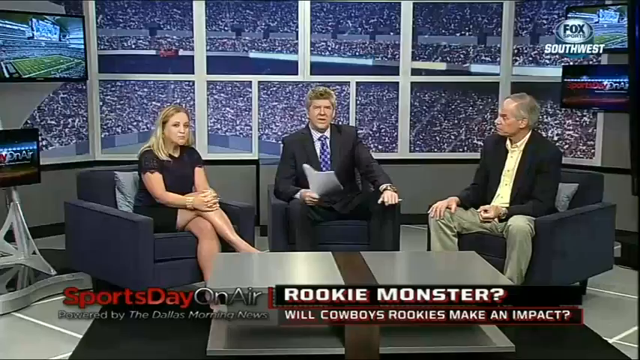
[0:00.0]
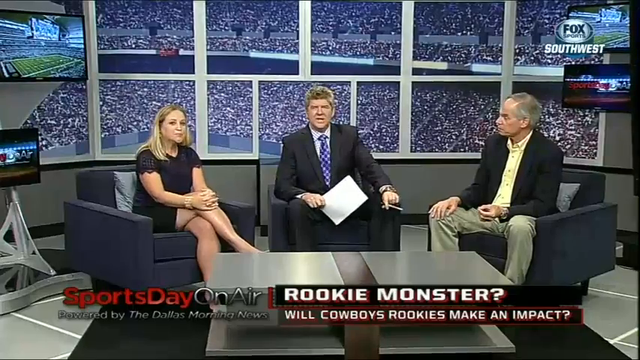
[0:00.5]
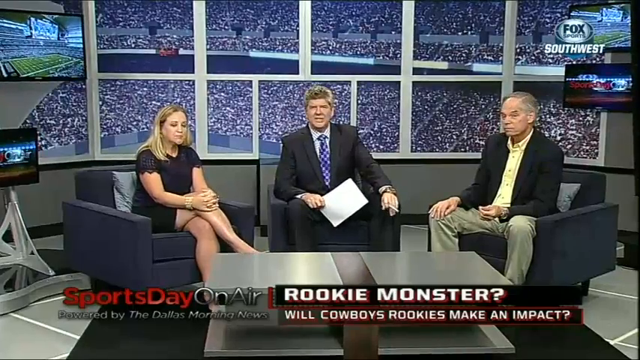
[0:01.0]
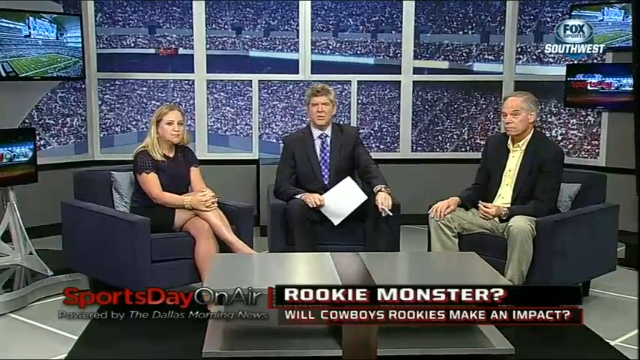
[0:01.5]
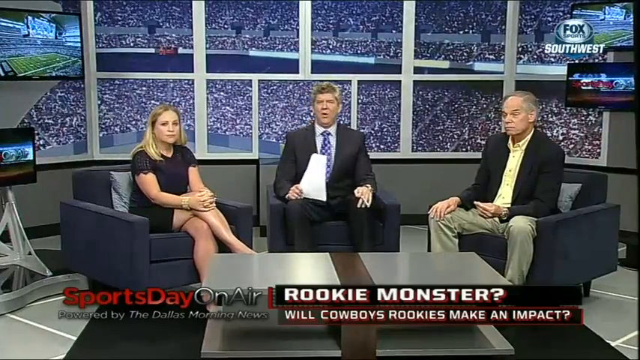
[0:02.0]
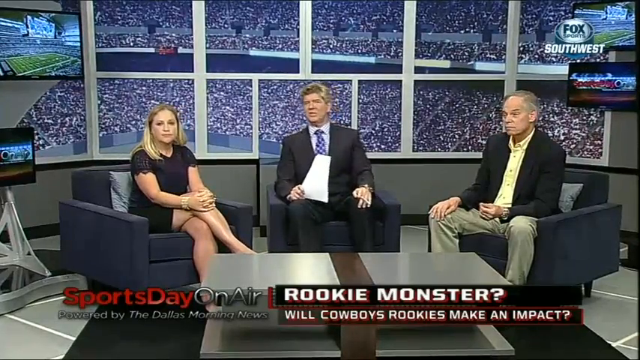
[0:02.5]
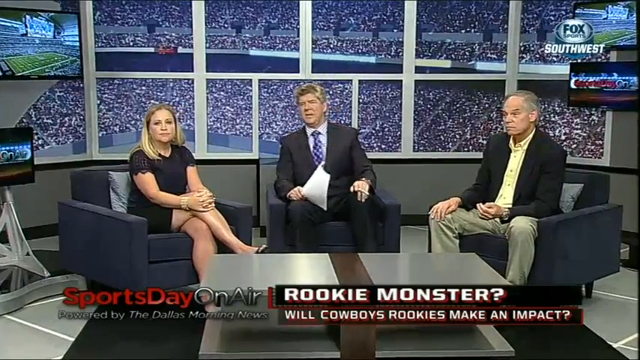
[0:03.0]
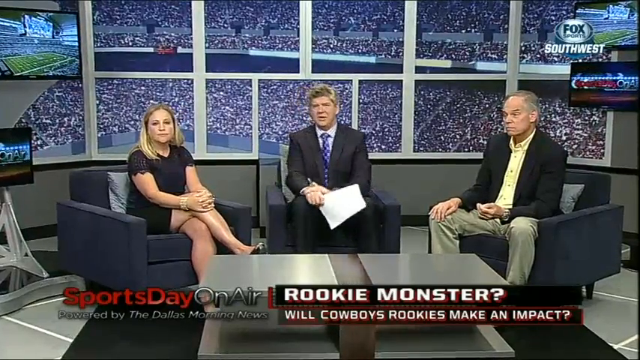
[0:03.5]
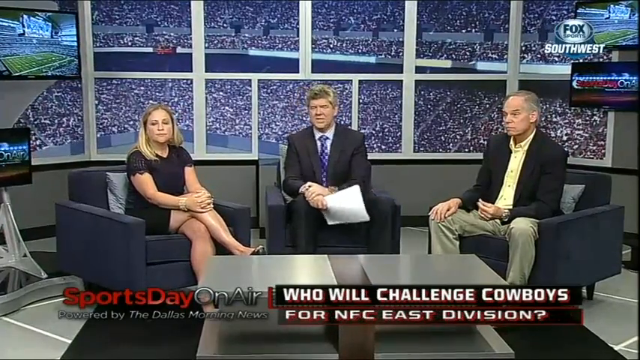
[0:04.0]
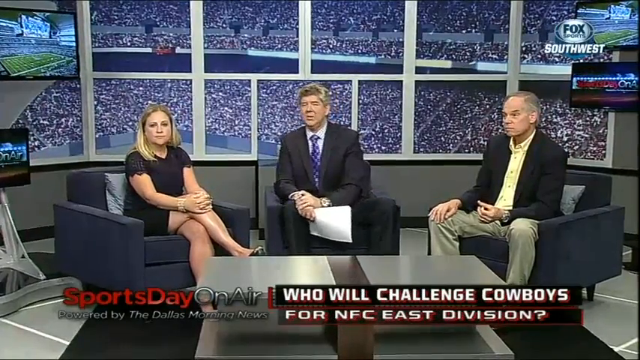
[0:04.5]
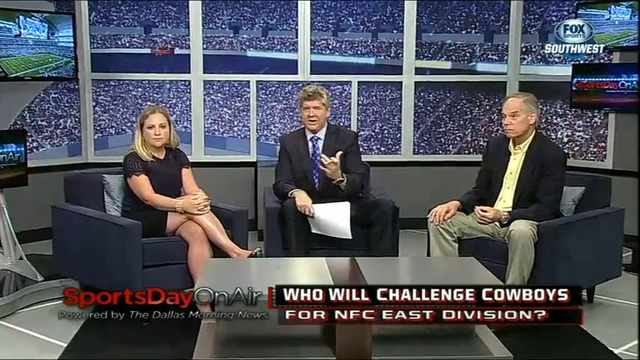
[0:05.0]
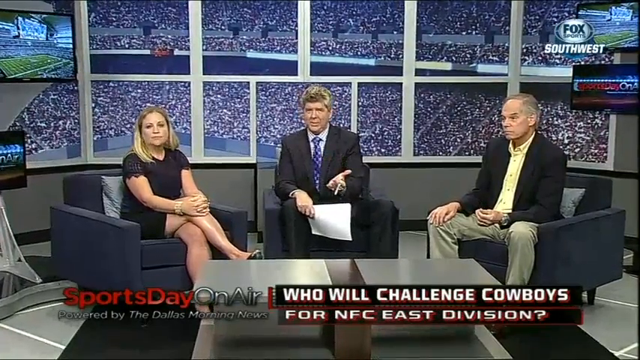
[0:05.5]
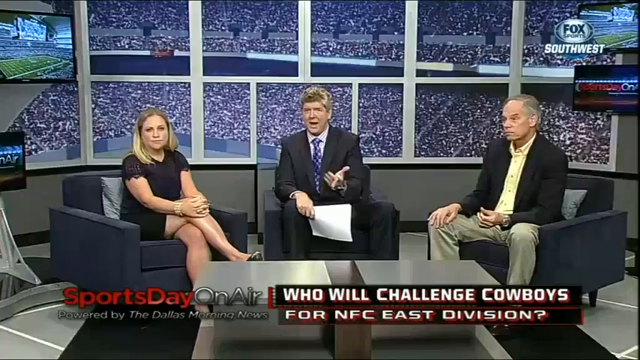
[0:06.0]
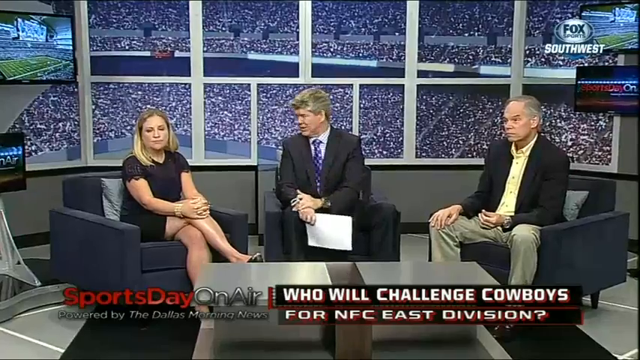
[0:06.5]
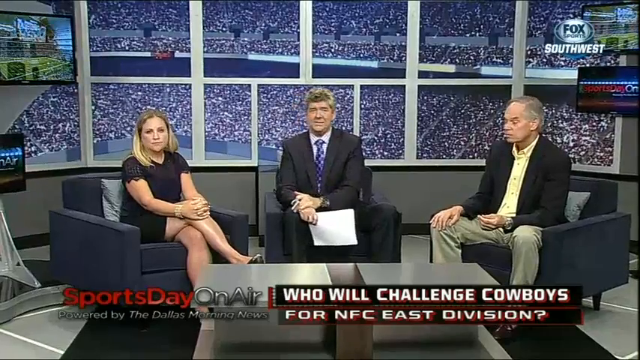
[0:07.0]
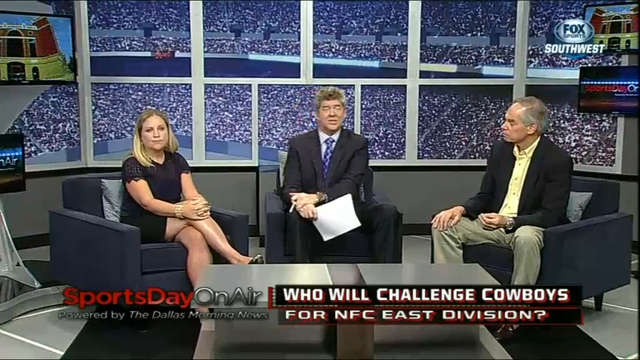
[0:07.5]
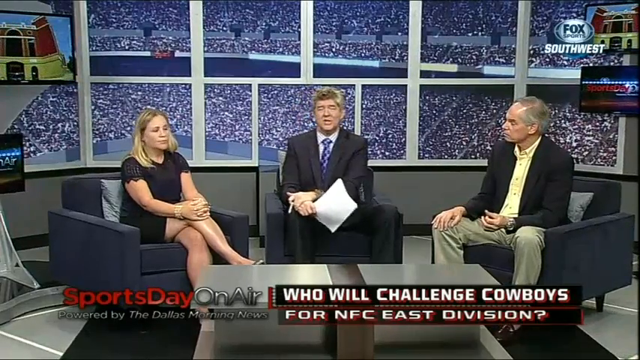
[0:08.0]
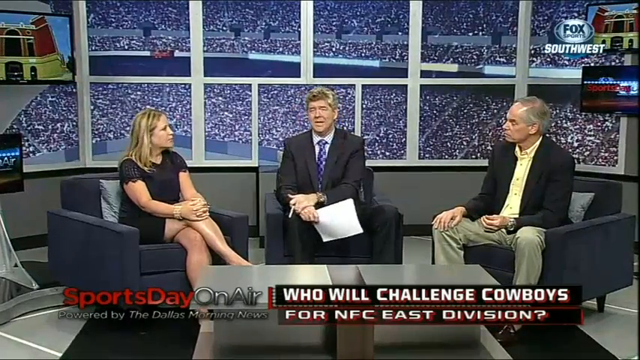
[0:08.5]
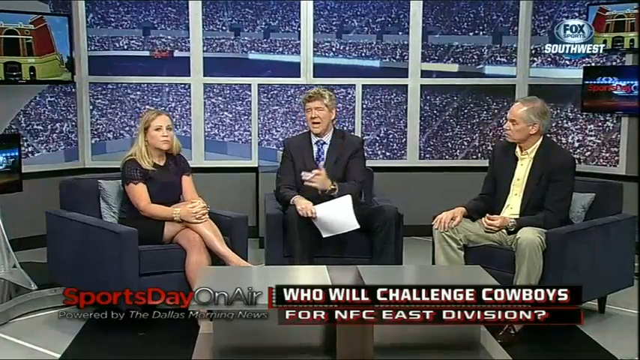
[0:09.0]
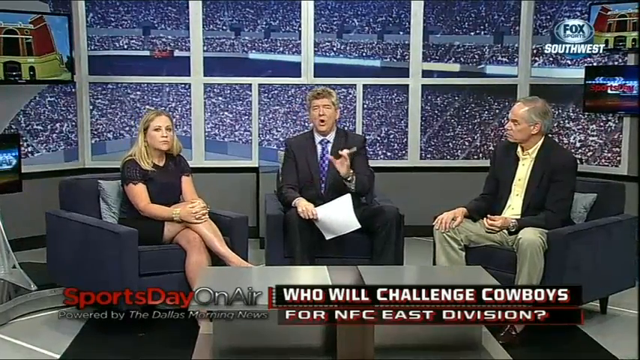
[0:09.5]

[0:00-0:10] Three people appear on what seems to be a TV broadcast: a small caption at the bottom reads "Sports Day on Air, powered by the Dallas Morning News," and text on the right side reads "Rookie Monster, Will Cowboy Rookies Make an Impact?" The three sit in what seems to be a TV studio. In the center, a man who looks to be in his 50s or 60s sits on a lounge chair, wearing a suit with a blue checkered tie. To his right is a woman who looks to be in her 30s or 40s, wearing a black lace top and a black skirt, with a pillow behind her. To the left of the central man is another, older man in a yellow dress shirt, a black jacket and light brown pants, with a watch on his left hand. A coffee table is in the center. Behind them is a window onto what seems to be the audience of a stadium, a quite large stadium with many audience members. In the background are several TV monitors, two on the left and two on the right.